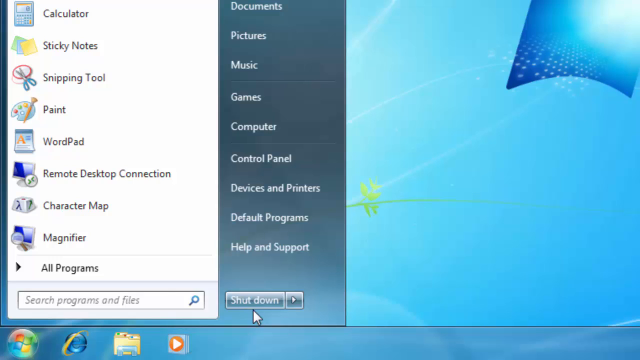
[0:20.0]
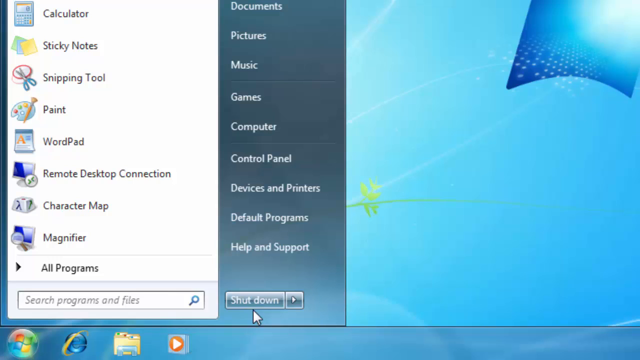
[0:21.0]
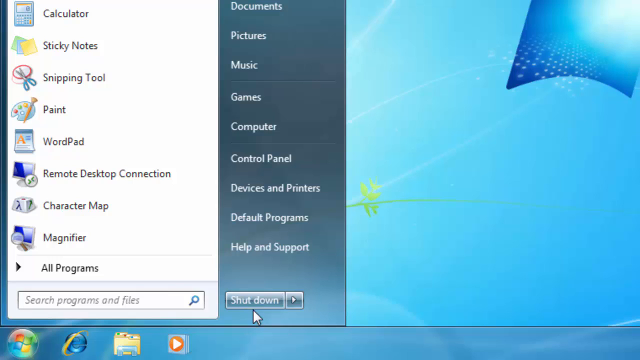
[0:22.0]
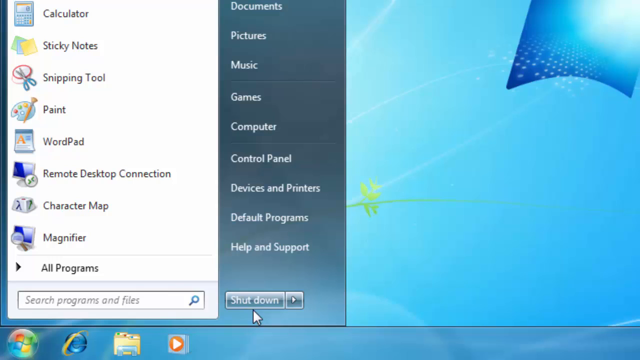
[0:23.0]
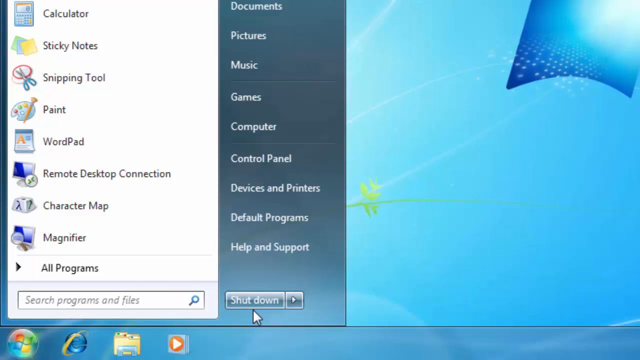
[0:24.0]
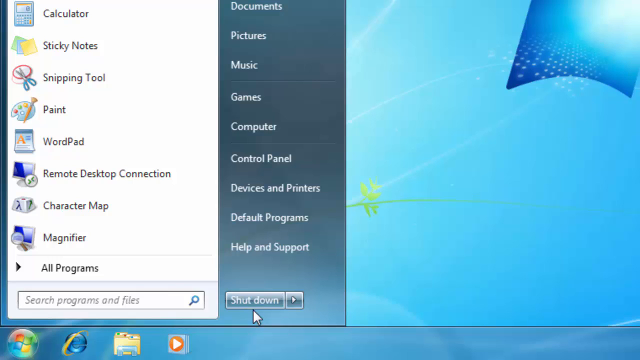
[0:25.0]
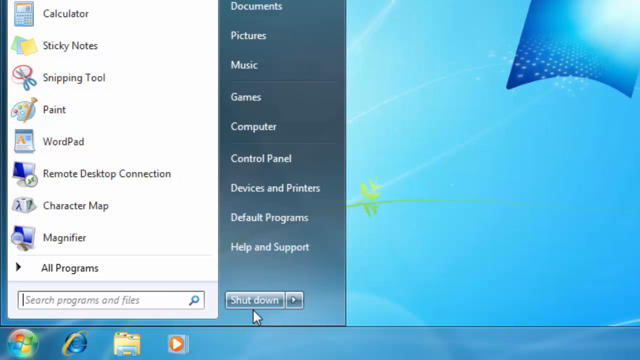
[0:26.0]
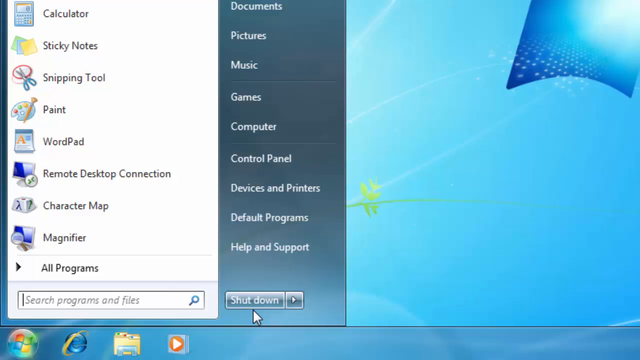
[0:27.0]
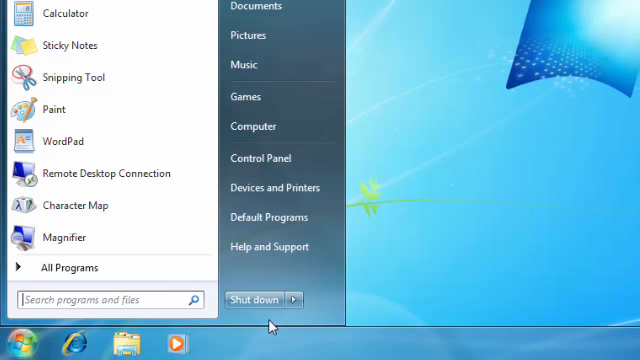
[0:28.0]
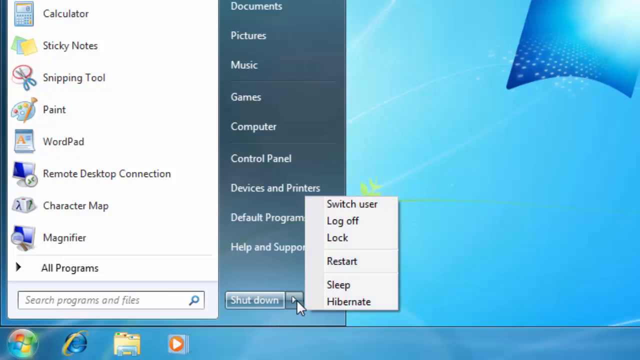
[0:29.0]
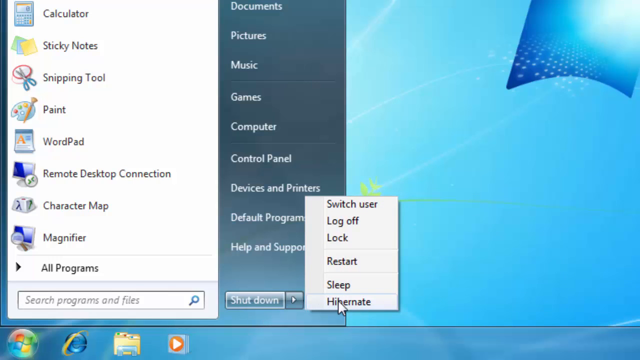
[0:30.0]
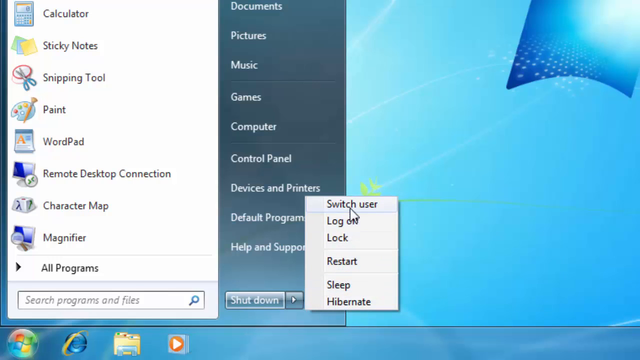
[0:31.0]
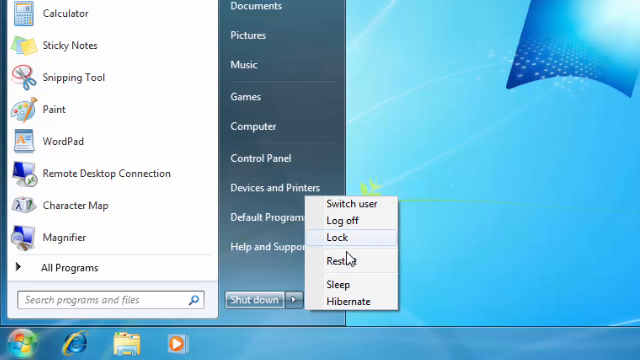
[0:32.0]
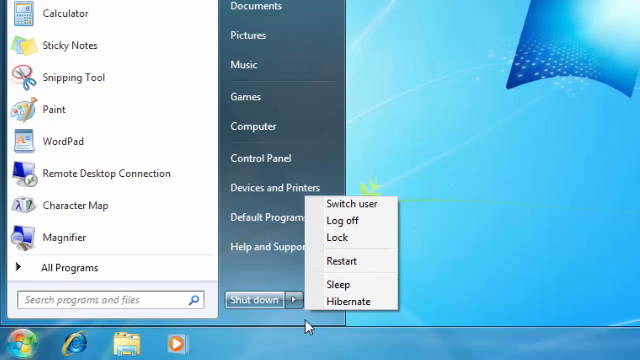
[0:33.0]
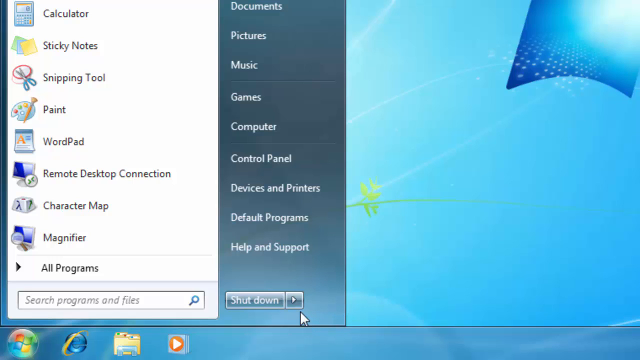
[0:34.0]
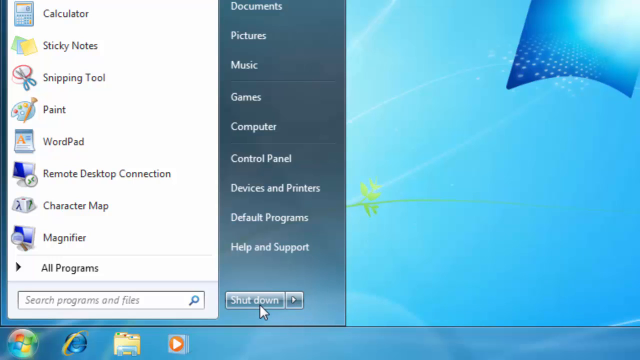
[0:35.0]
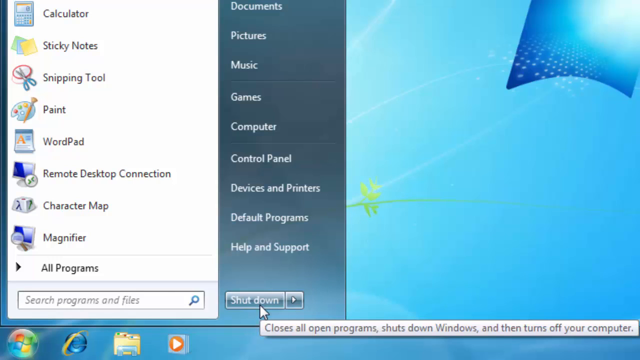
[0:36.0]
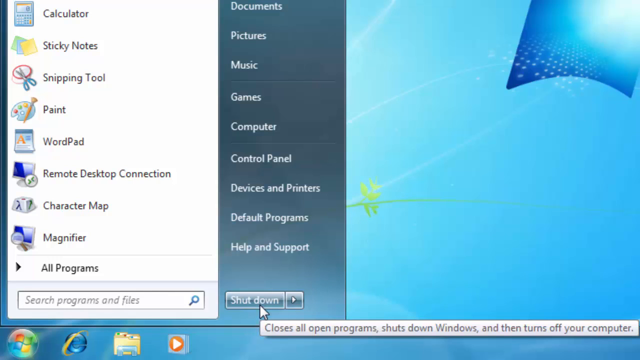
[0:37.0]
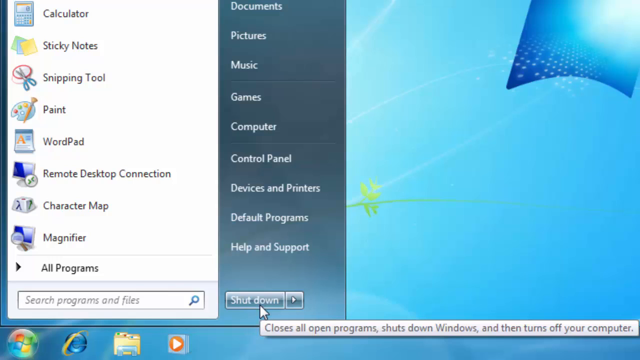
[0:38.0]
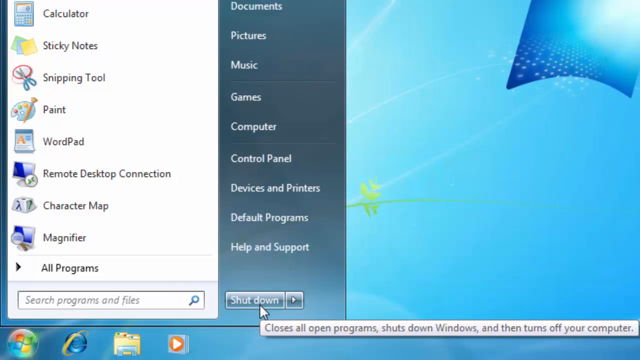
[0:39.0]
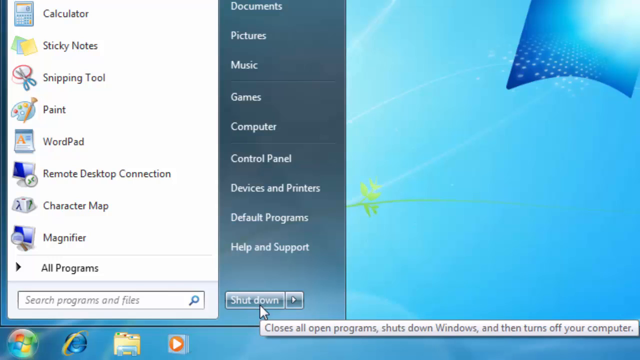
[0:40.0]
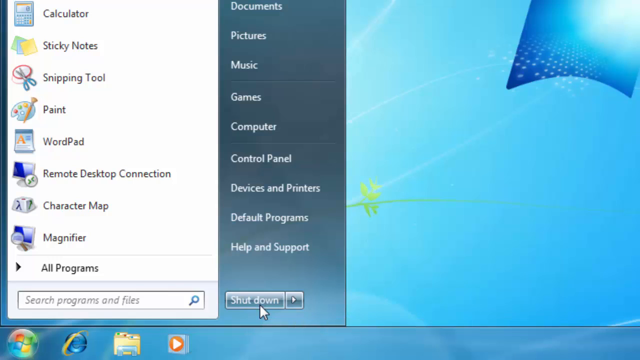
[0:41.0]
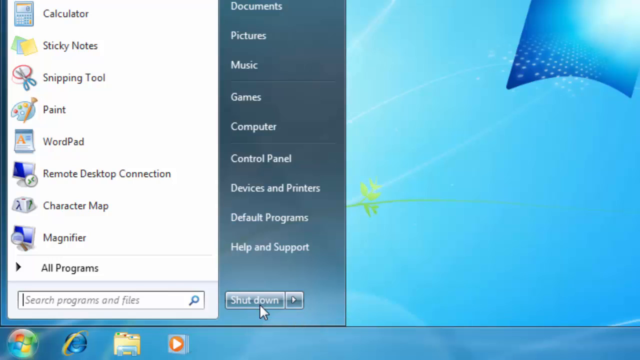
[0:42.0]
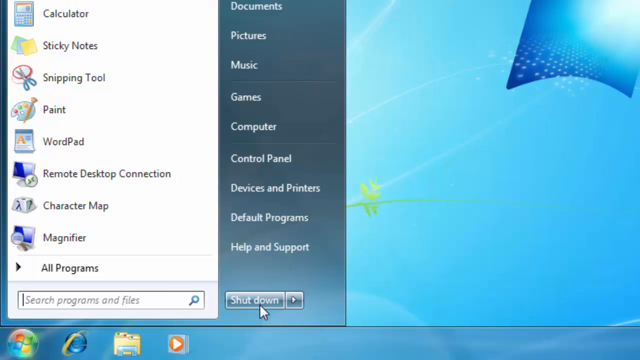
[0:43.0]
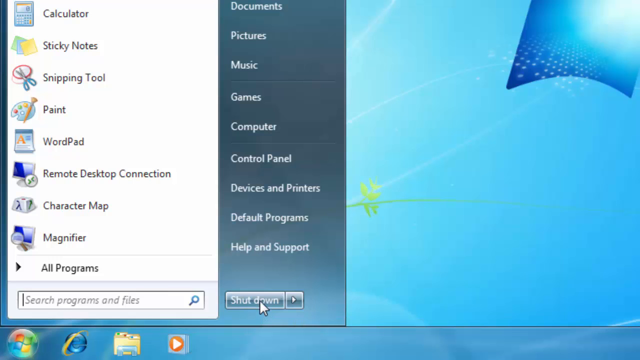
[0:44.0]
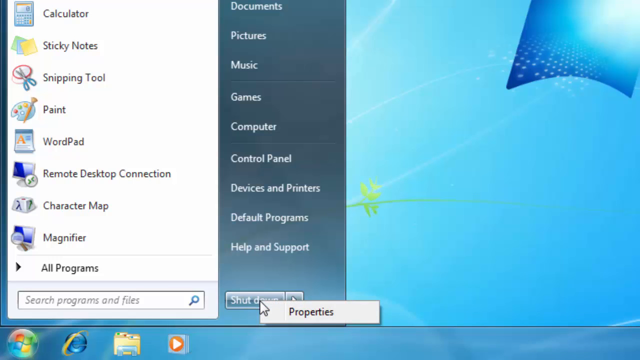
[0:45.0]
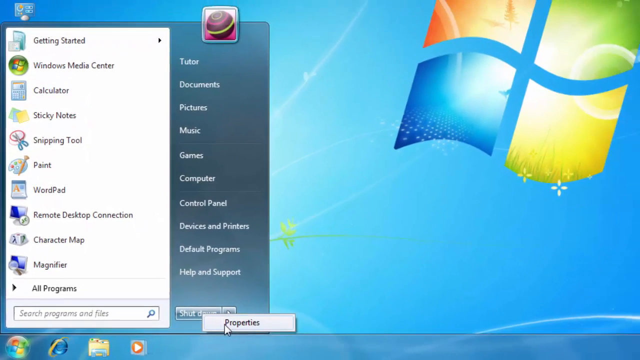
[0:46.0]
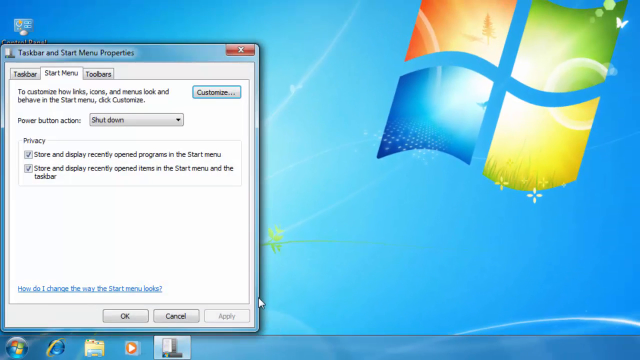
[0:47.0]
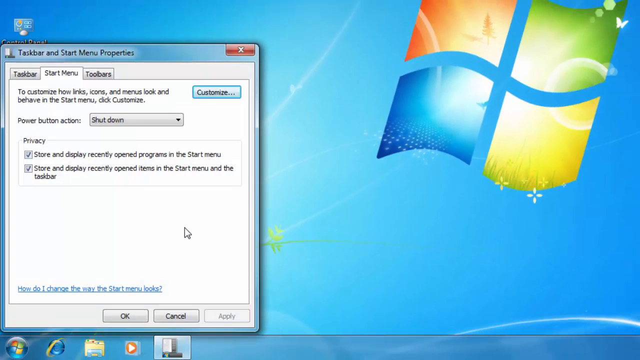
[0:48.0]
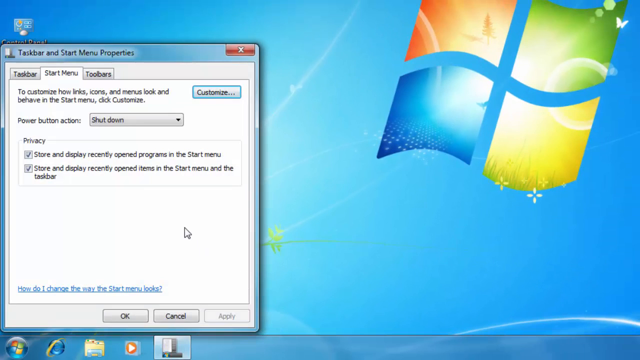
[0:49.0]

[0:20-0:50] The user presses Start and a list of programs pops up: magnifier, character map, remote desktop connection, paint, snipping tool, sticky notes, calculator, documents, pictures, music, games, computer, control panel, device and printers, default programs, and help and support. The computer apparently runs Windows 7 and is dragging. The wallpaper is a plain blue one with a few flowers. There are also options for sleep, hibernate and many others.